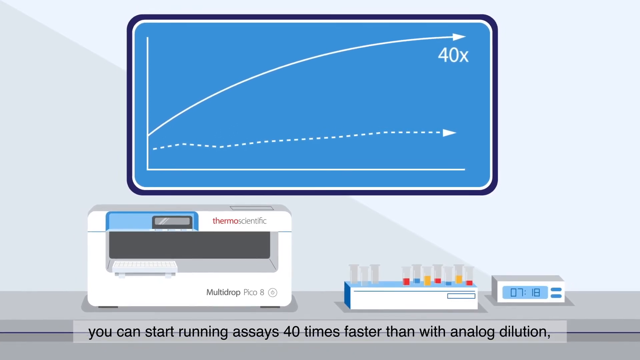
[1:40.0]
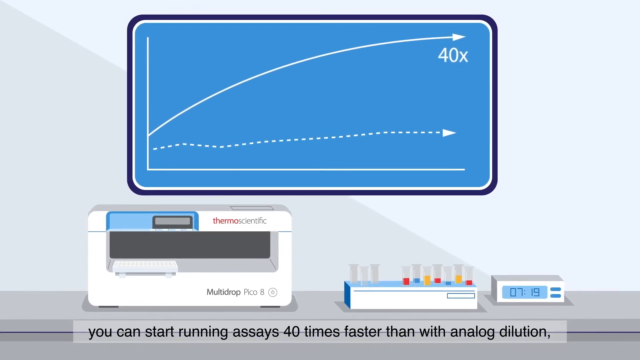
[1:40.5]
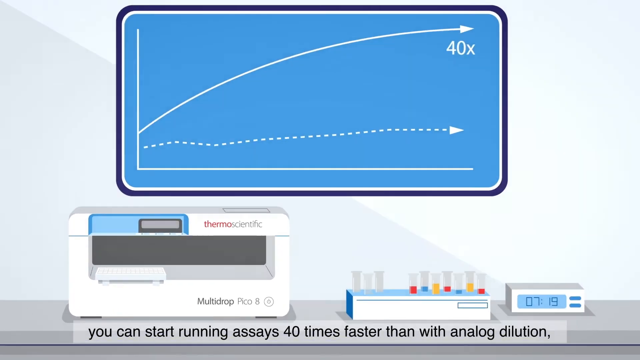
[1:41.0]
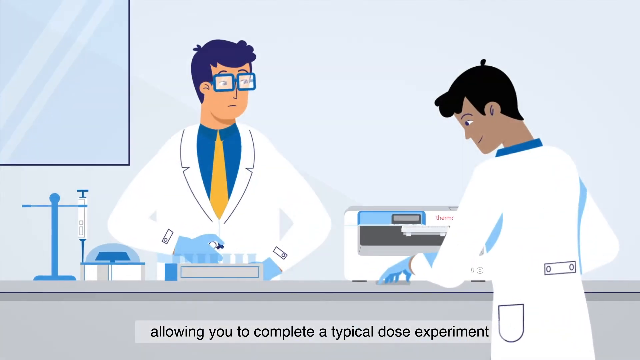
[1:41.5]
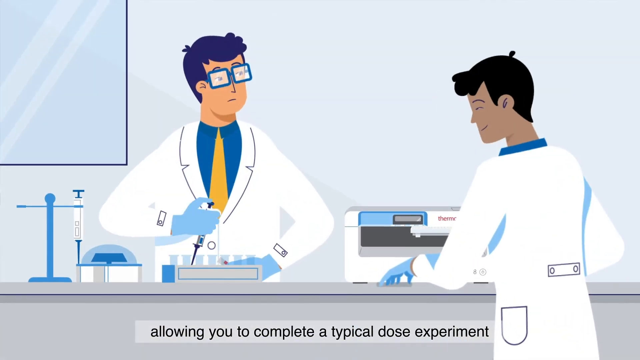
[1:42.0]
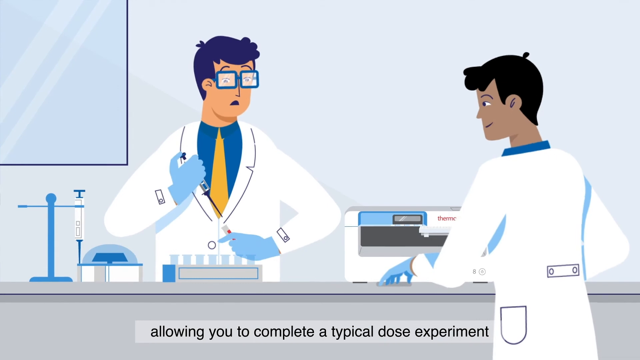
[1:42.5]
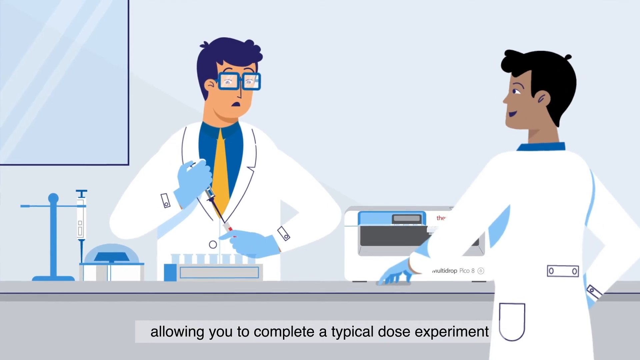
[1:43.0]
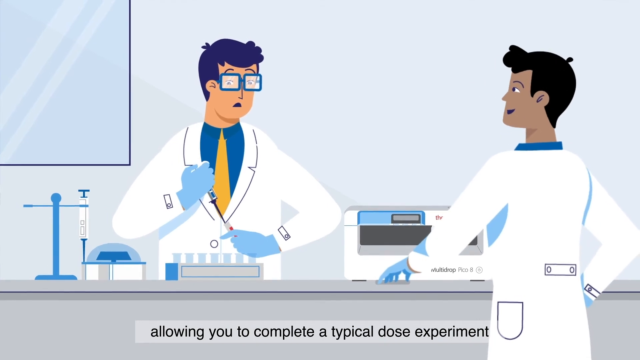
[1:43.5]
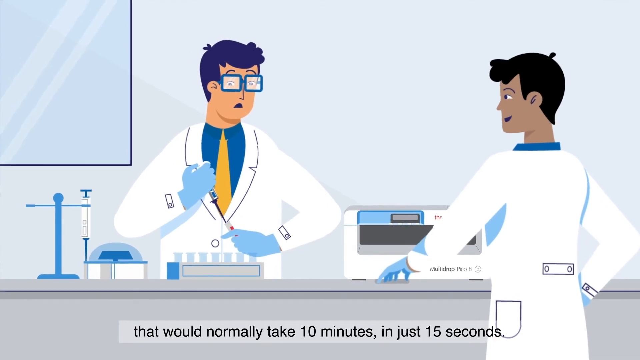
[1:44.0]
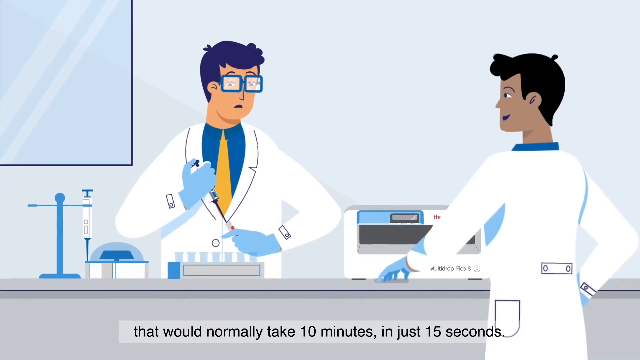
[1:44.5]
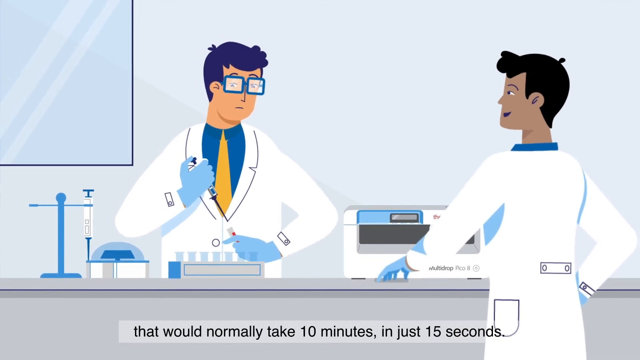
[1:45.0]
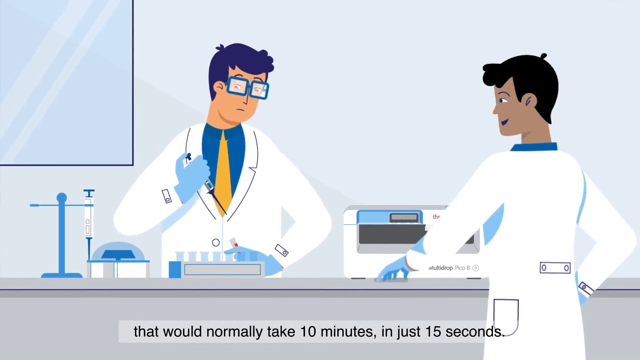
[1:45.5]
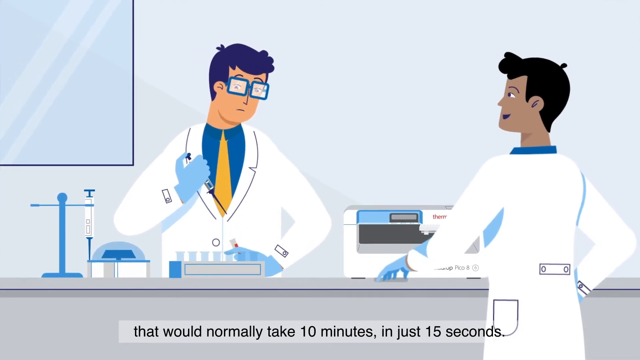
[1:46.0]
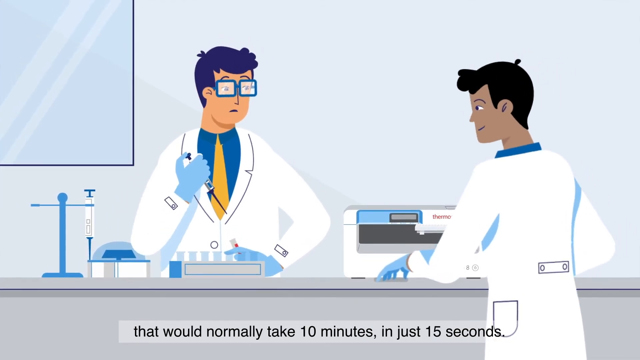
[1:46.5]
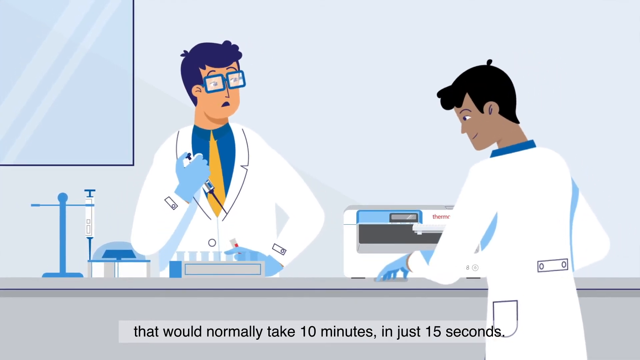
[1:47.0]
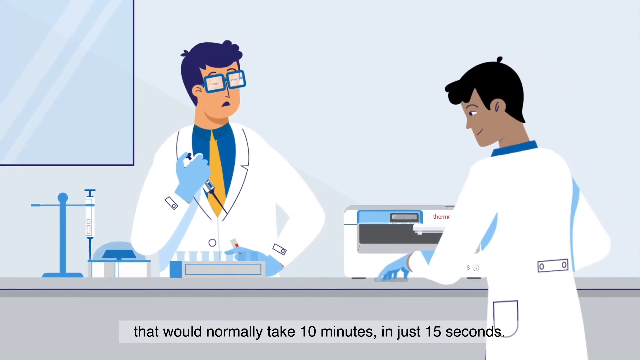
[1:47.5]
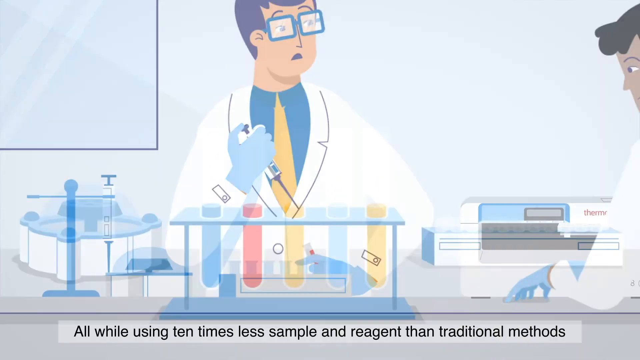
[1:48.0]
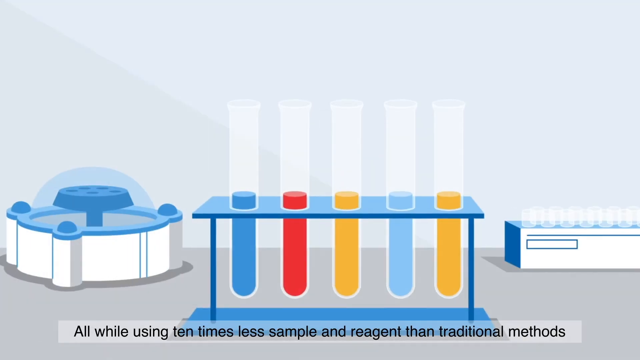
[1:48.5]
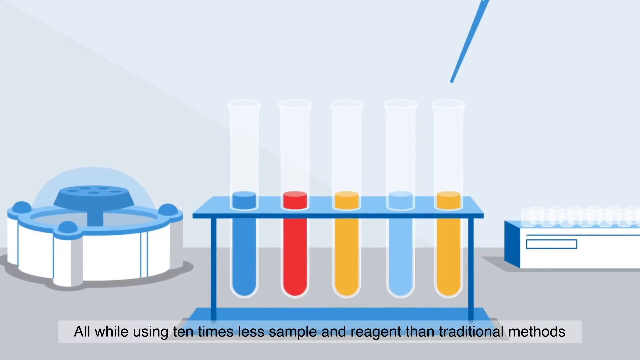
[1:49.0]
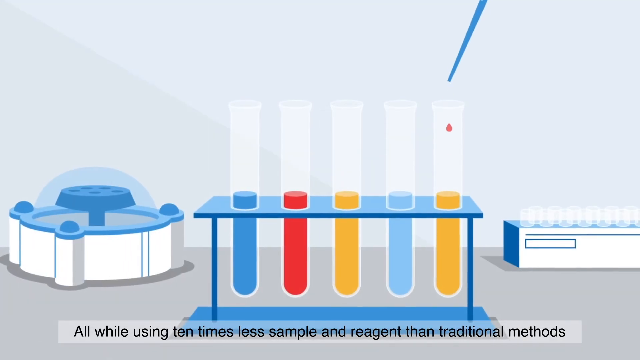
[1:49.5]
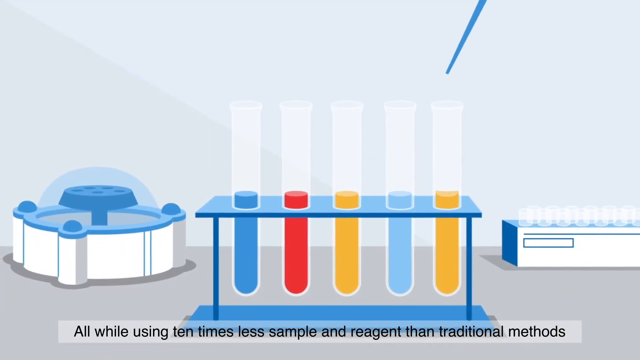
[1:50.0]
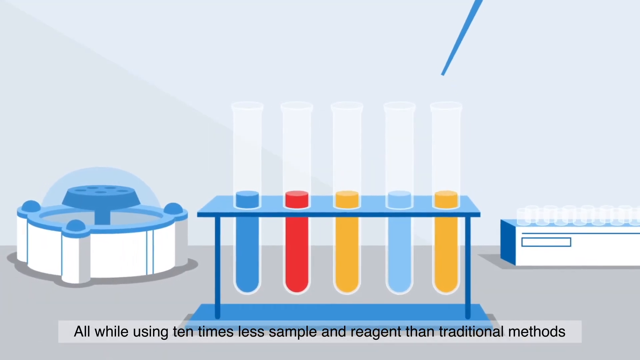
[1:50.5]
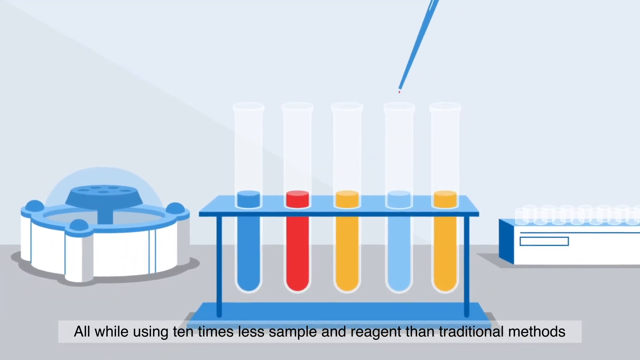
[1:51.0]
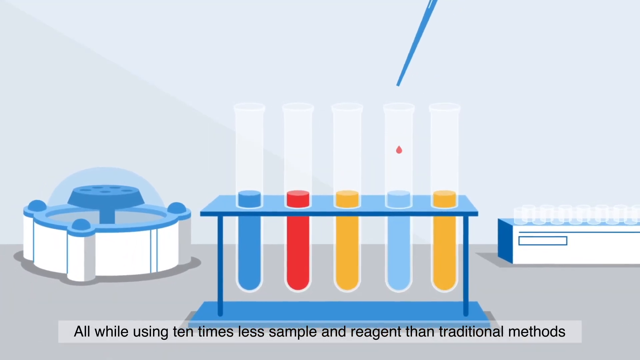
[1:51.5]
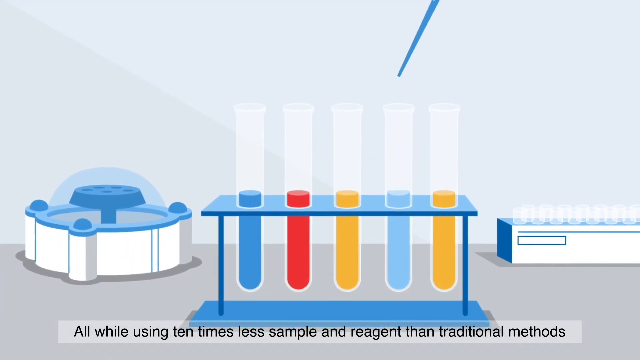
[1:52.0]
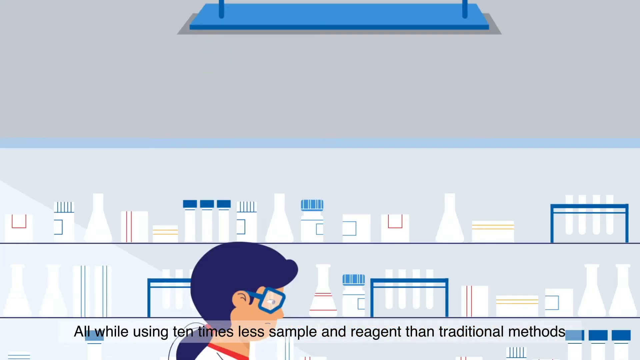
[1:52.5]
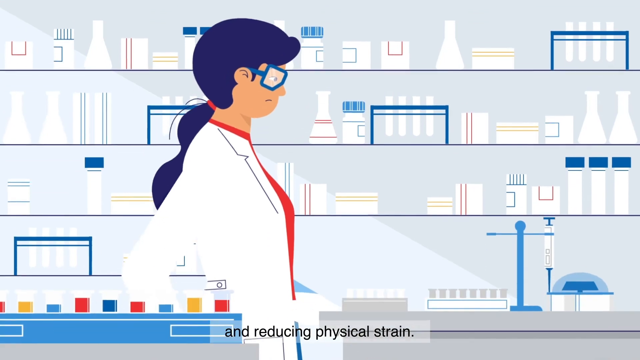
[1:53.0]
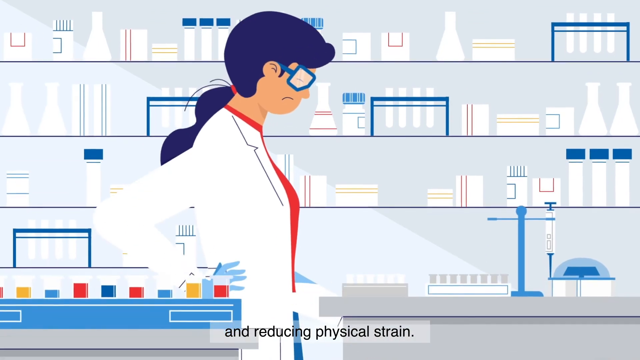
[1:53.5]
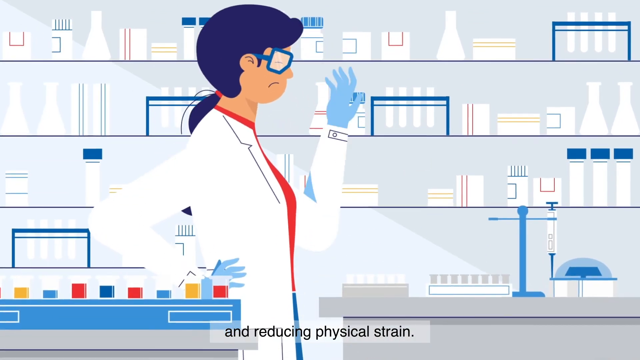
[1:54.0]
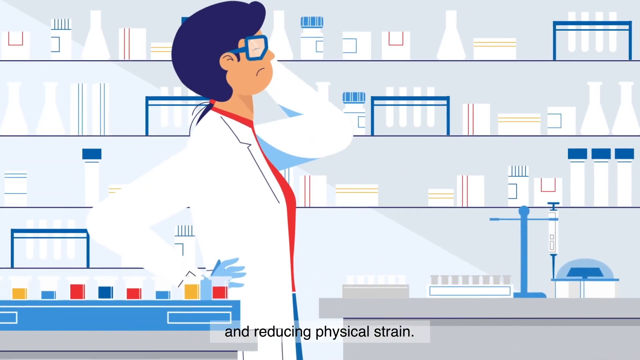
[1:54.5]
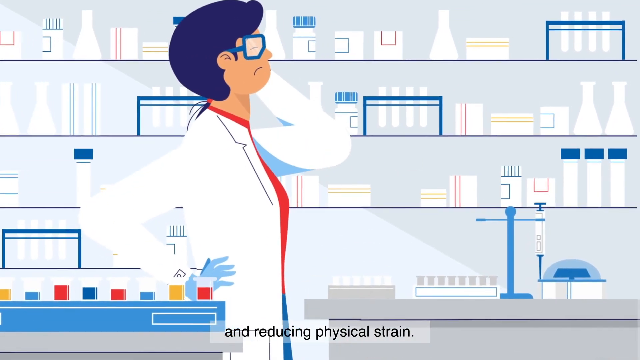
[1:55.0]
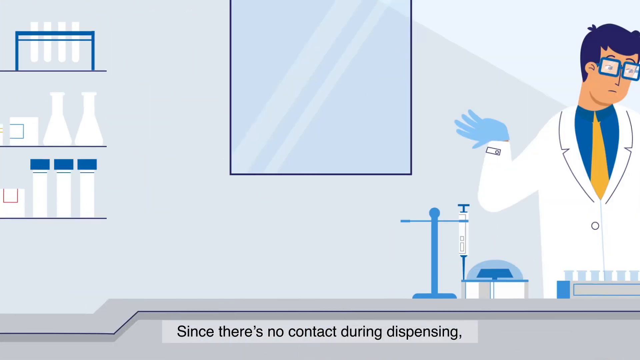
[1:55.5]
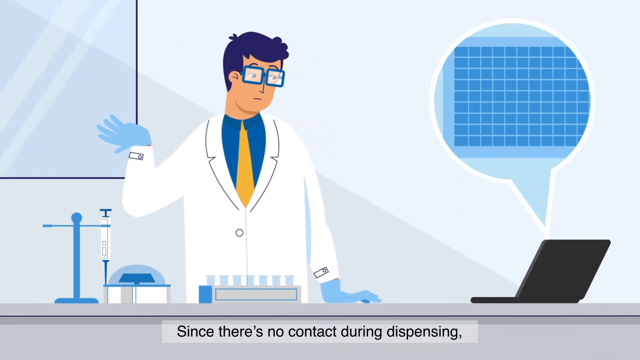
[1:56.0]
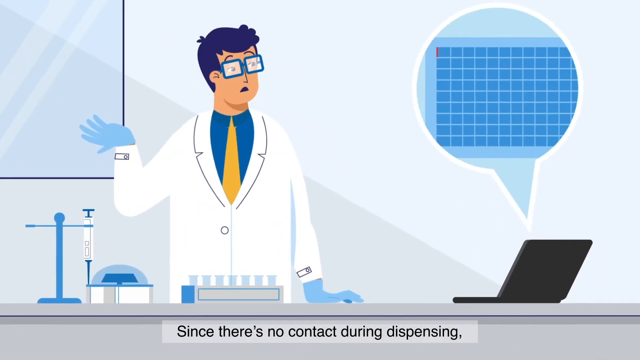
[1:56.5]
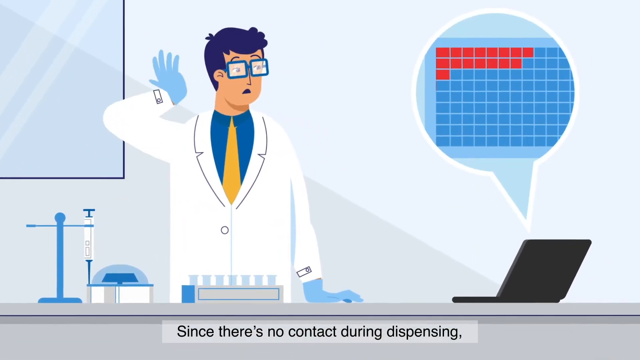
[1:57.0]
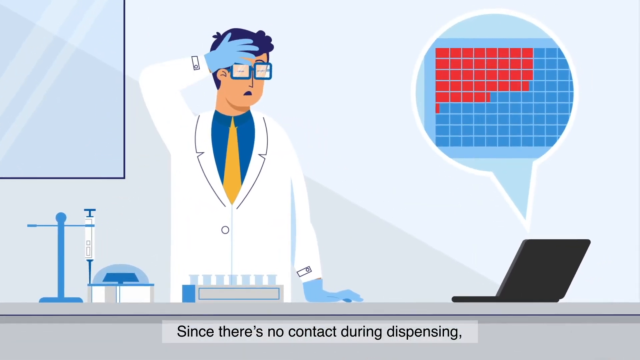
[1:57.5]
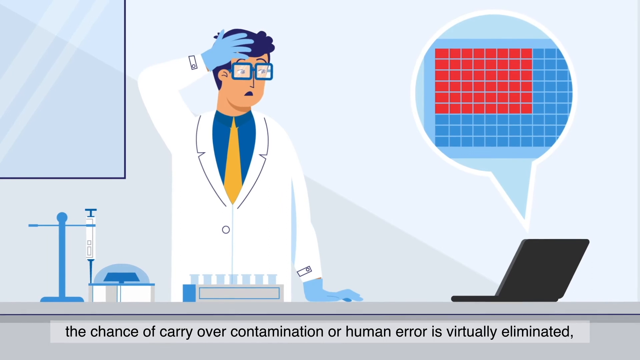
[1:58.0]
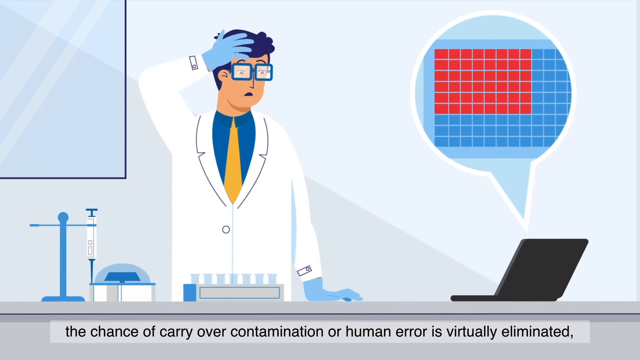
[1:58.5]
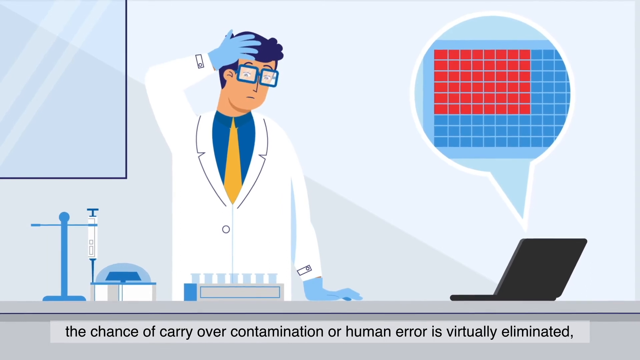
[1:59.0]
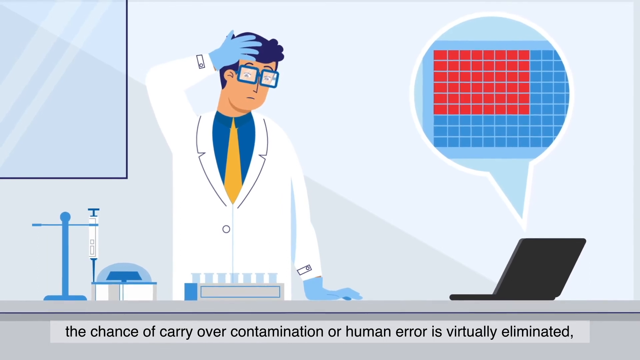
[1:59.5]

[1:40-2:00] A gray table at the bottom of the screen has three items on top of it. One is some kind of machine with "Thermoscientific" on the top of it and "Multidrop Pico-8" on the bottom right, with a power button next to those words and an LED screen to the left of the Thermoscientific wording. To the right of the machine is a container holding vials of red, blue and yellow fluids. To the right of the vial holder is a clock of some sort that reads "718". Above the table is some kind of chart with two arrows, one arching up and one going across, and the text "40 times". The arrow going up and over is a solid line with an arrowhead at the end, while the one going roughly straight across is a little wavy, dotted, and has an arrowhead at the end.